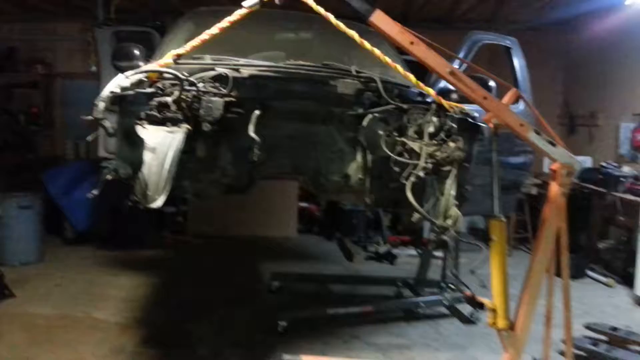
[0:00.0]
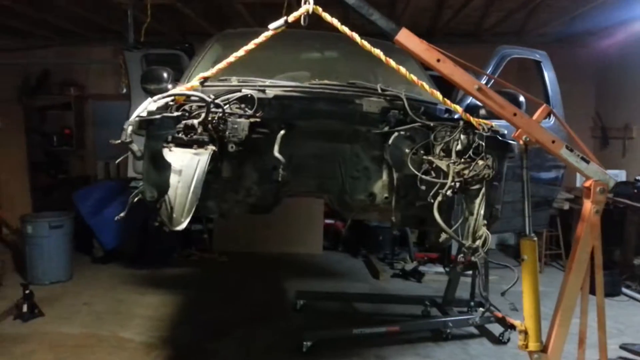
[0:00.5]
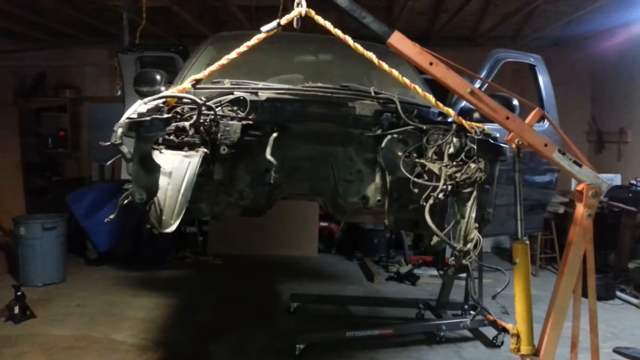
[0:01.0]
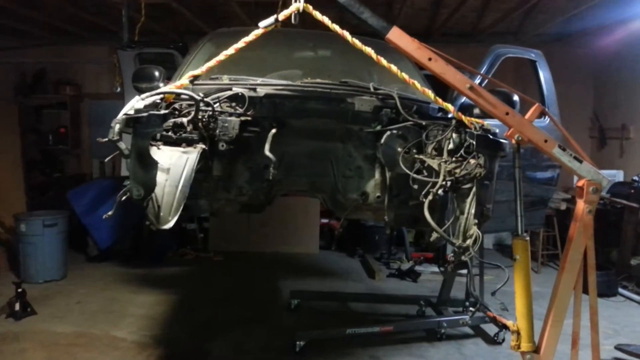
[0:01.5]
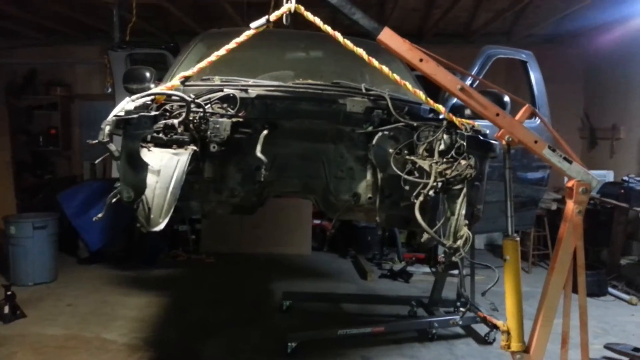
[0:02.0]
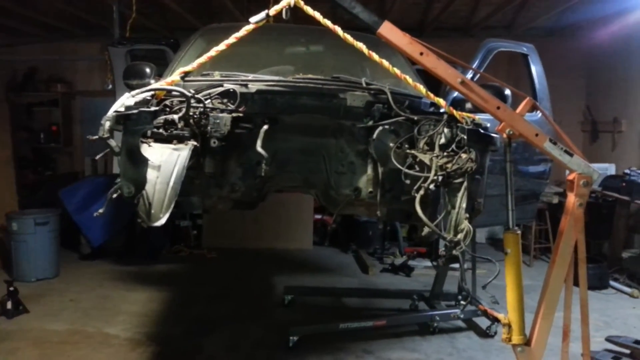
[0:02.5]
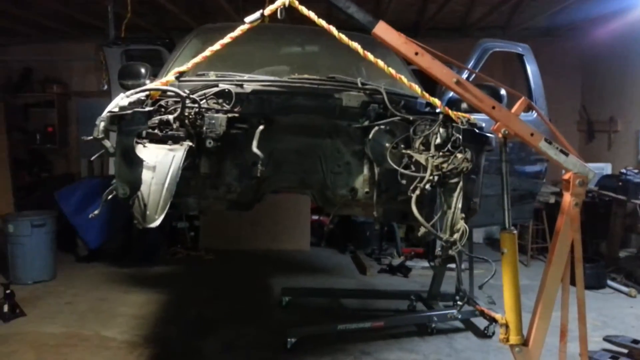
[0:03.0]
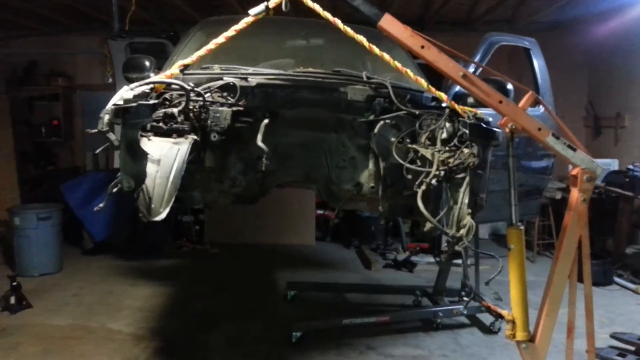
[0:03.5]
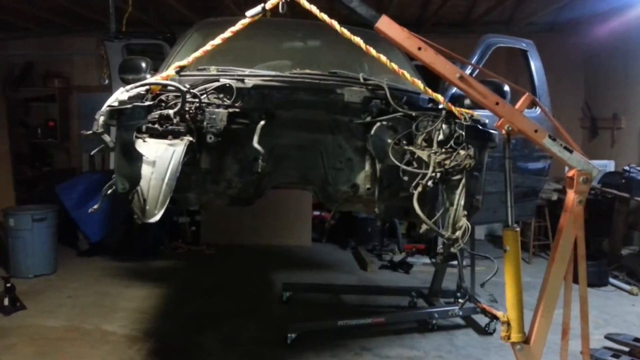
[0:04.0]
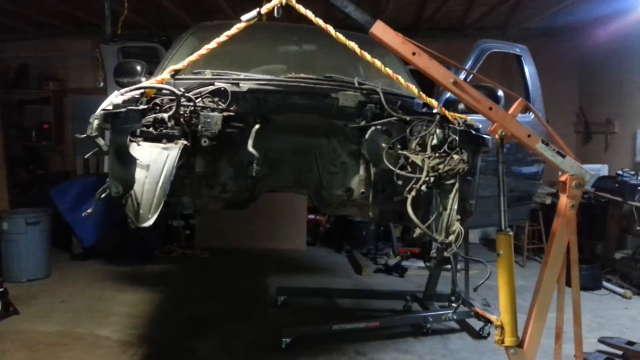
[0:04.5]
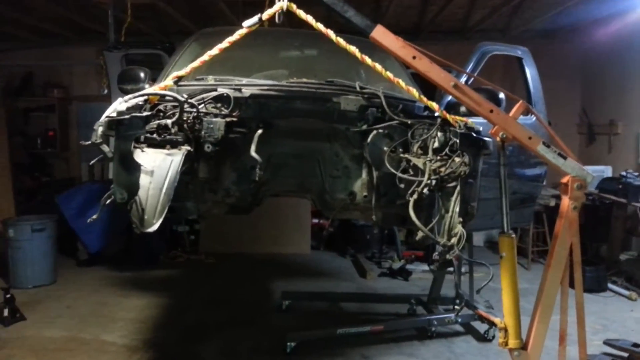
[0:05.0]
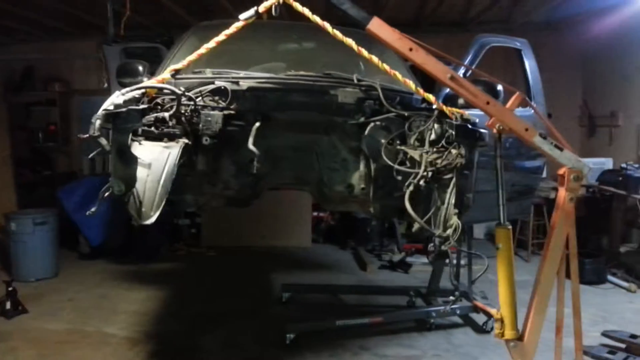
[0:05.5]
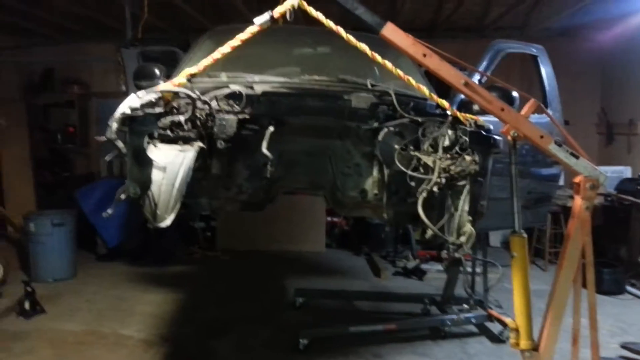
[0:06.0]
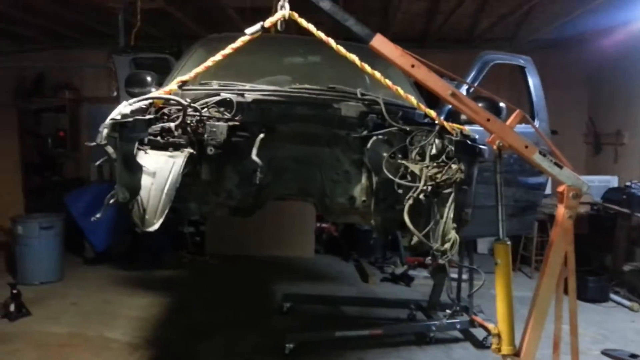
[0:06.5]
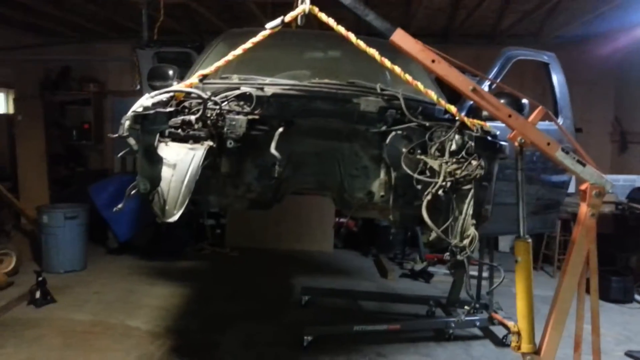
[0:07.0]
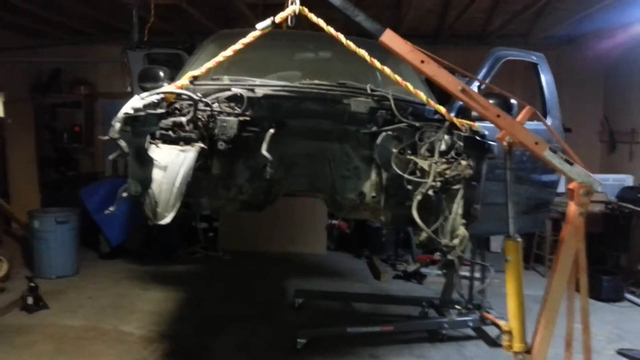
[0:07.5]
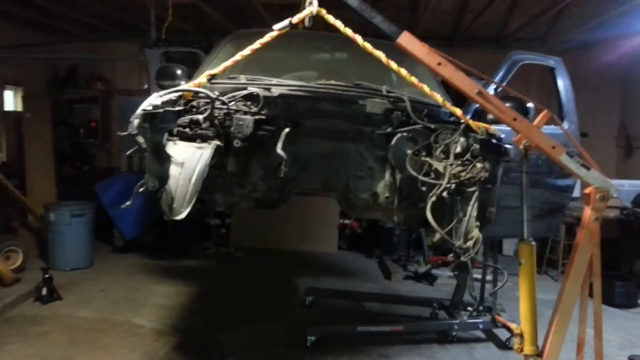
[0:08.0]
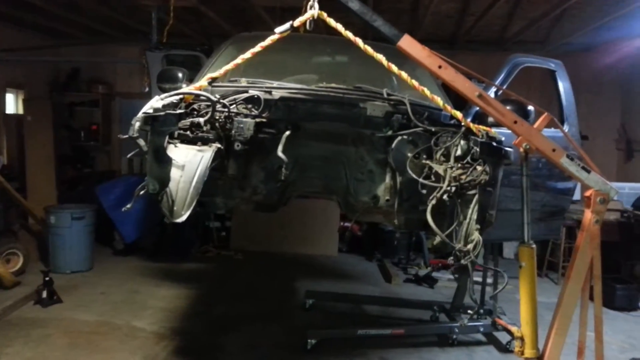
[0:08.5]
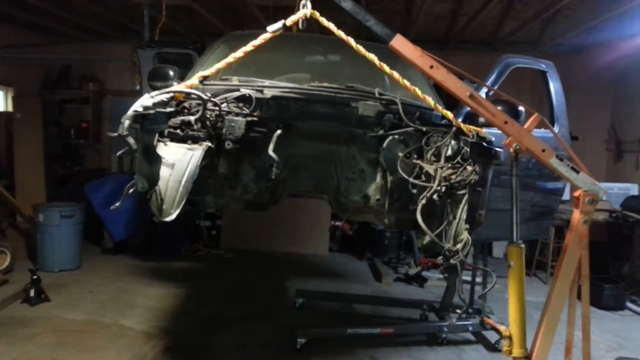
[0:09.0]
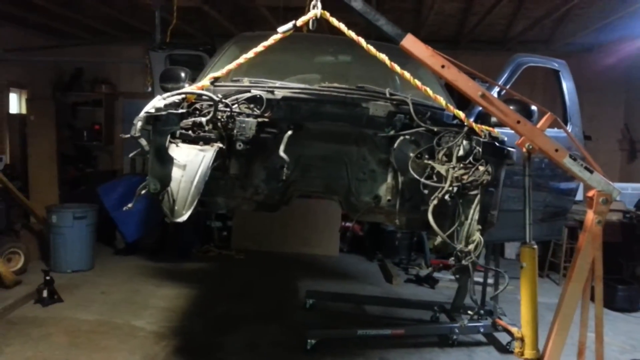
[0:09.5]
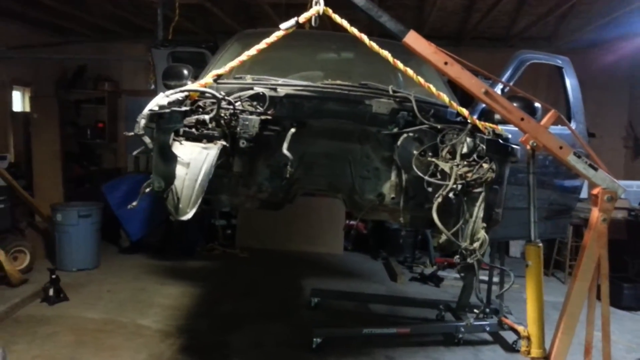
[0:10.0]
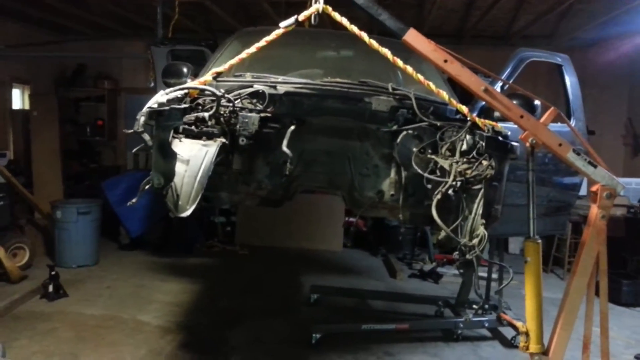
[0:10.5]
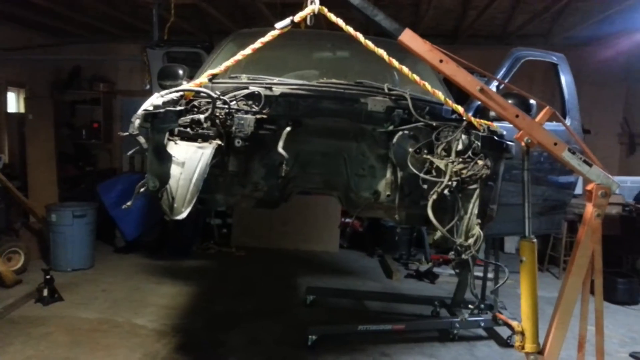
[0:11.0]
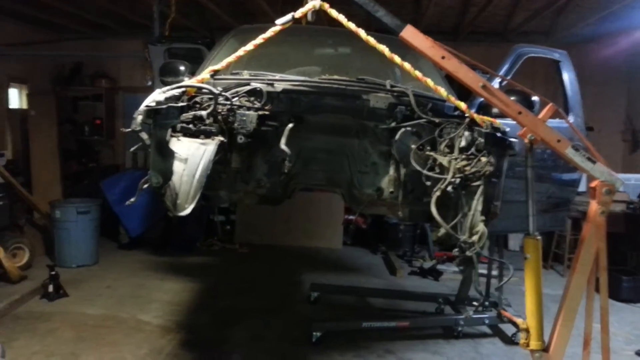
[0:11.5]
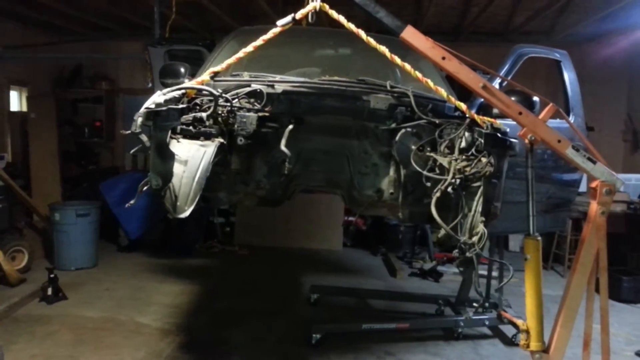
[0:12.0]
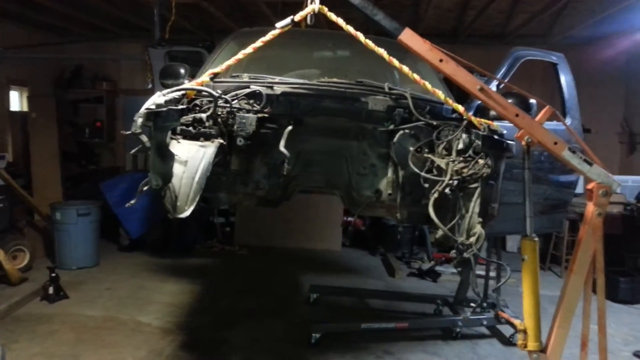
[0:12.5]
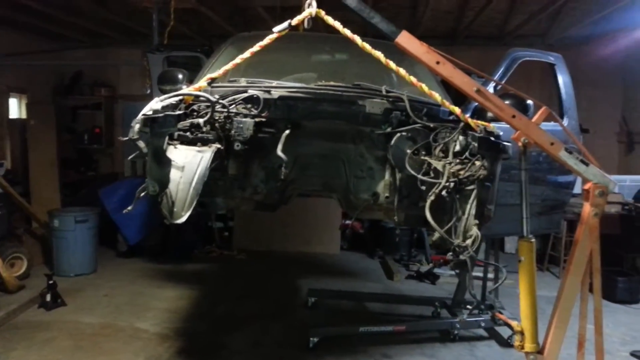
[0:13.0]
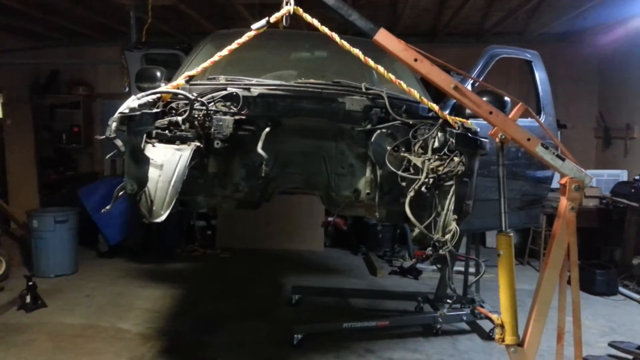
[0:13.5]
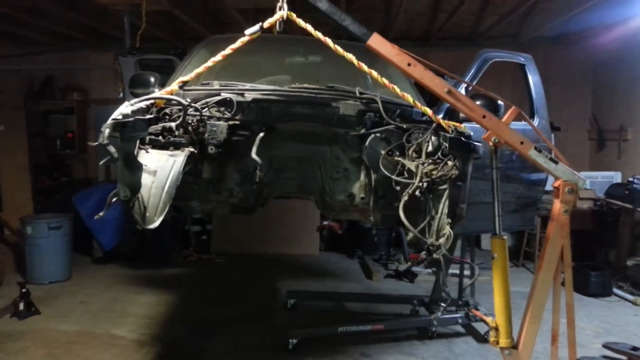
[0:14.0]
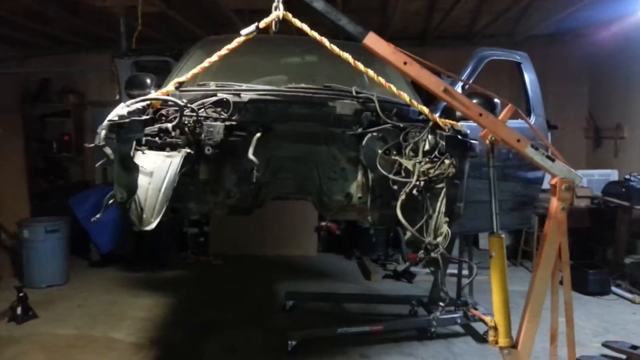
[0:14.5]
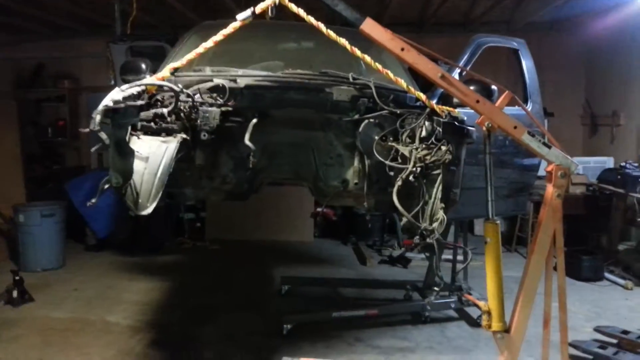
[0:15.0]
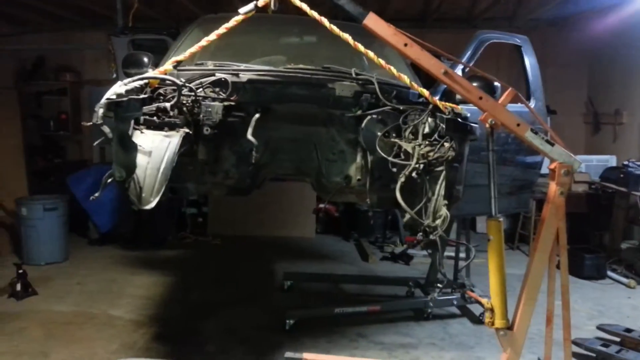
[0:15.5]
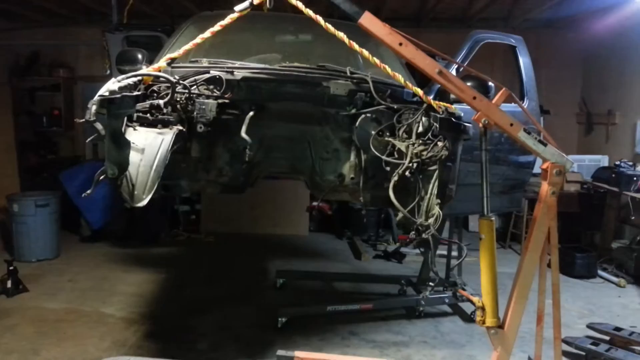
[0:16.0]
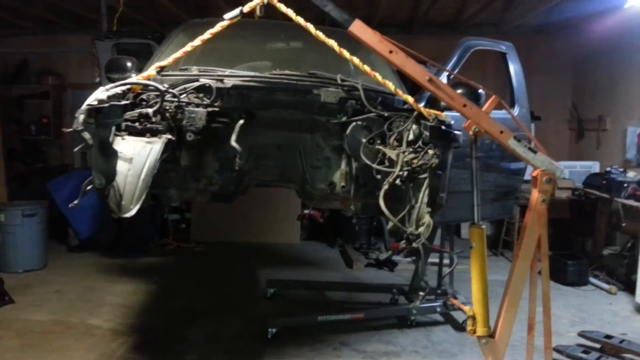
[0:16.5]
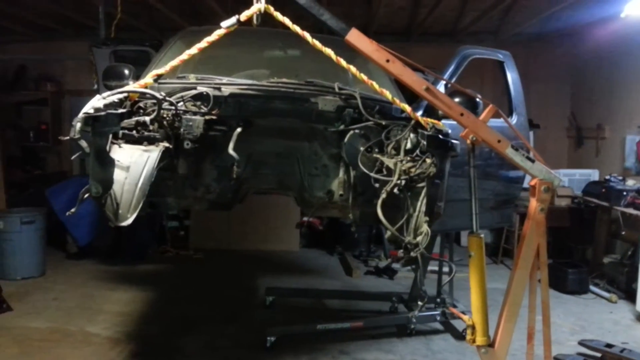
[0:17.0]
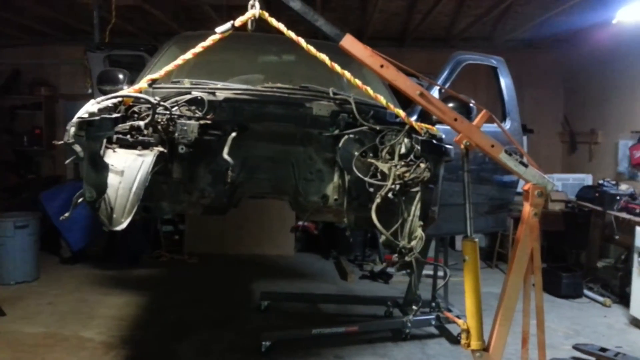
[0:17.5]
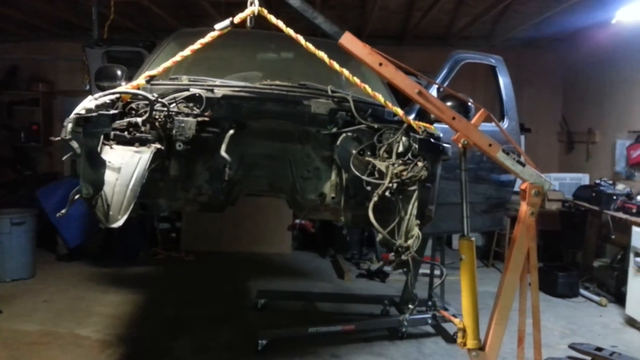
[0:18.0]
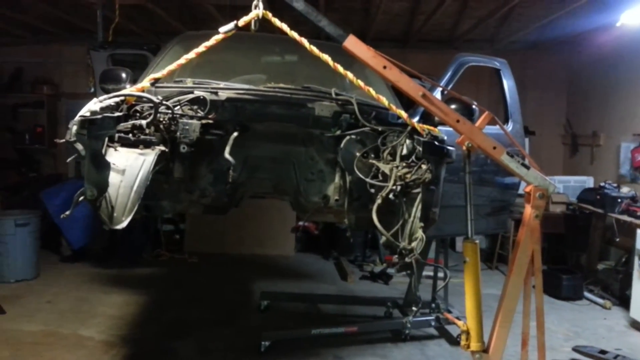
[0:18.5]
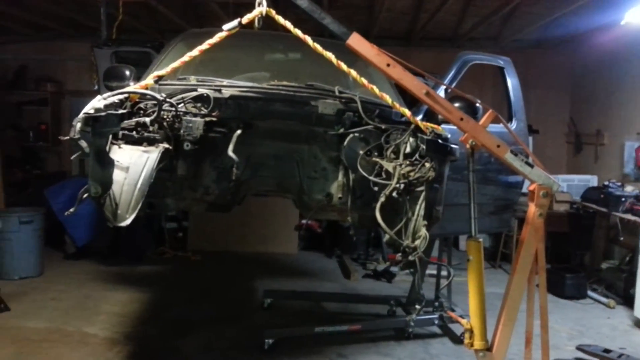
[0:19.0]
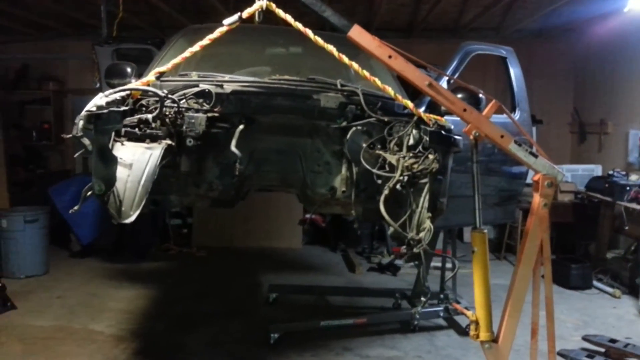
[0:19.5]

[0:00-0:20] A car hangs, apparently from a rope attached to the ceiling, with some kind of metal attachment at the top center of the frame. The front of the car is gutted, with wires visible on either side, and the right door is open. The footage is somewhat shaky as it looks at the suspended vehicle. The room is fairly dark; a bright light is in the upper right corner but does not cast much illumination on the back of the room. On the left are a blue trash can and what looks like a blue tarp. On the right there appears to be a work table with some things on it. The floor seems to be concrete, and the space is likely a garage. Also on the right is what looks like a mini crane that is holding up the vehicle as well.